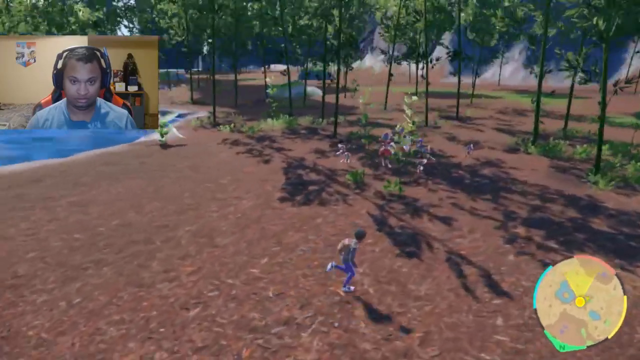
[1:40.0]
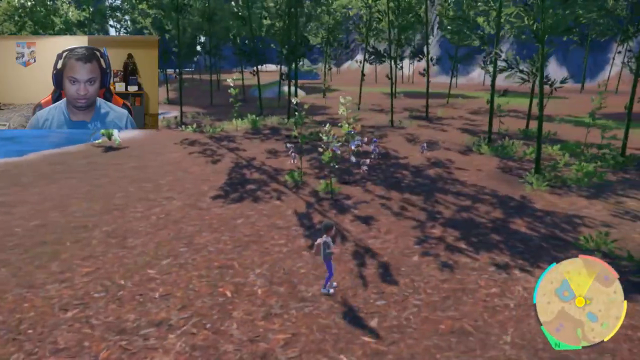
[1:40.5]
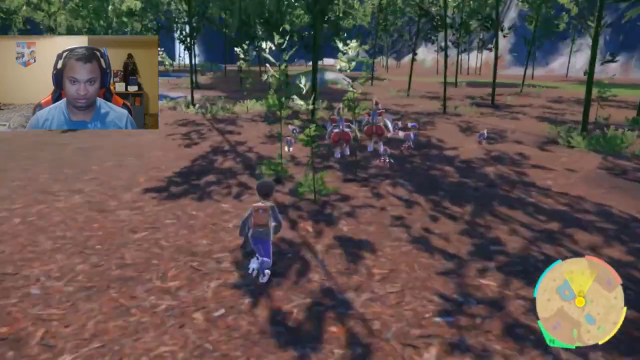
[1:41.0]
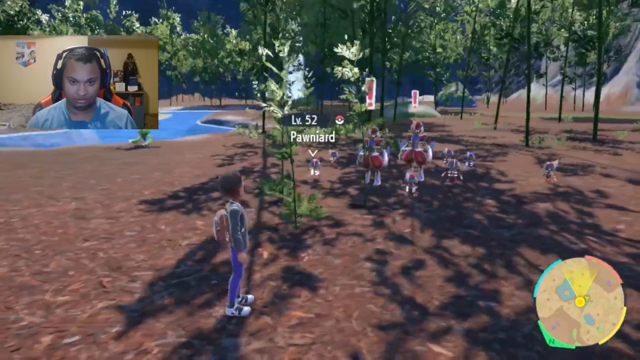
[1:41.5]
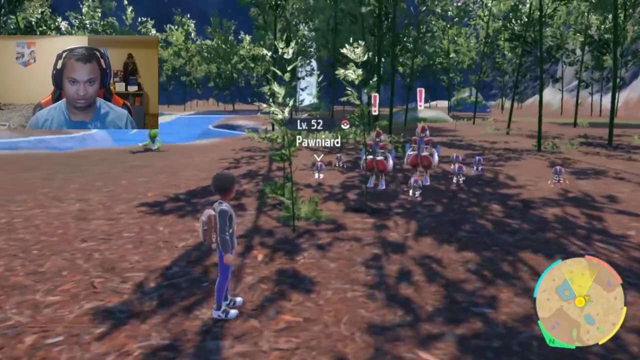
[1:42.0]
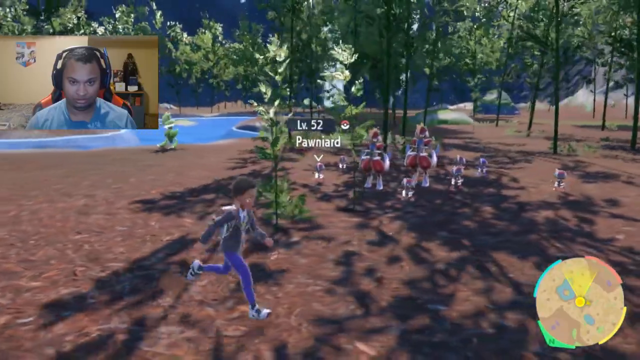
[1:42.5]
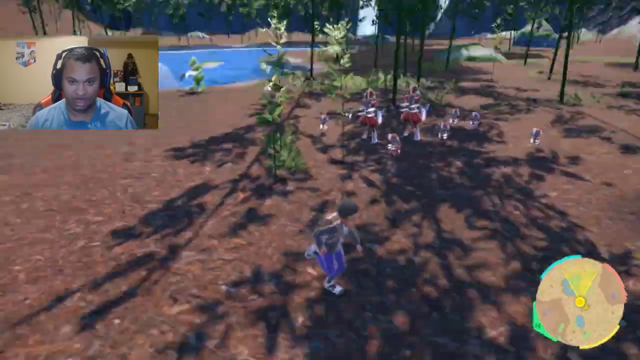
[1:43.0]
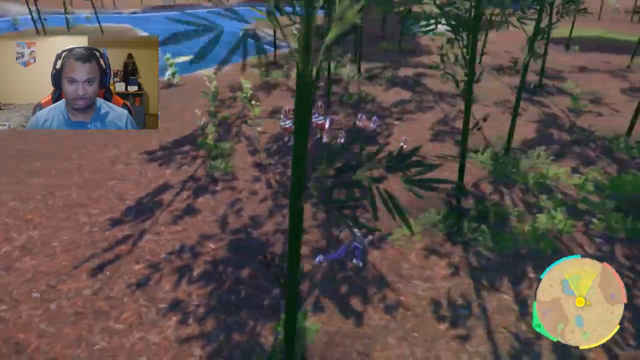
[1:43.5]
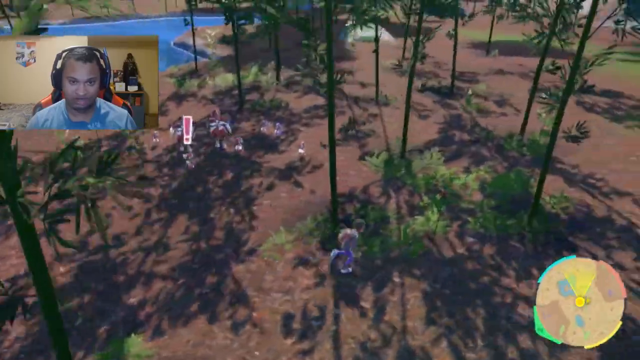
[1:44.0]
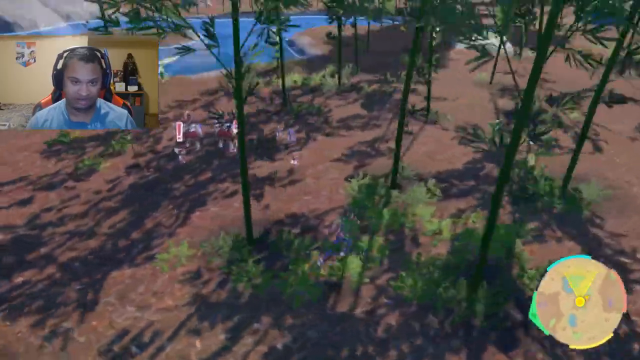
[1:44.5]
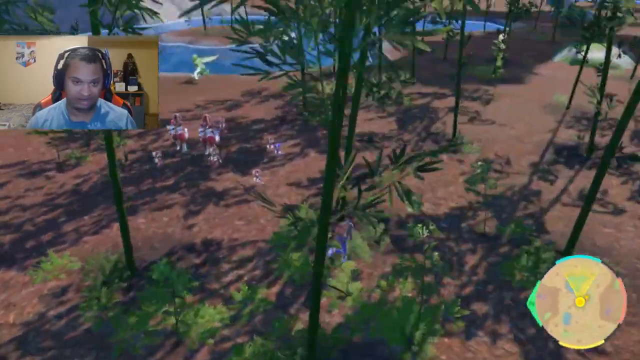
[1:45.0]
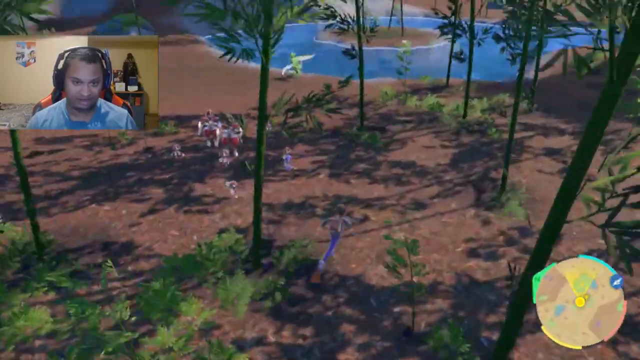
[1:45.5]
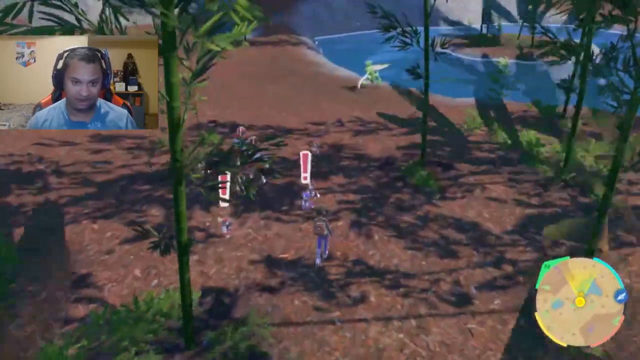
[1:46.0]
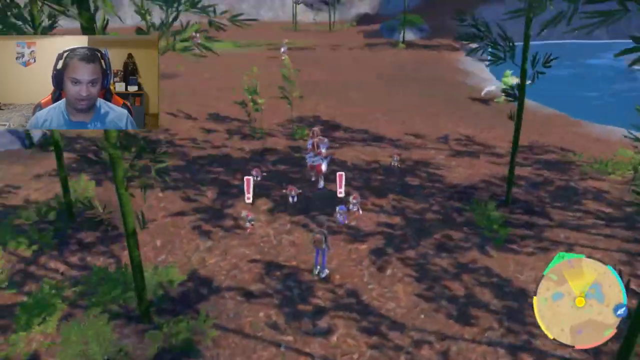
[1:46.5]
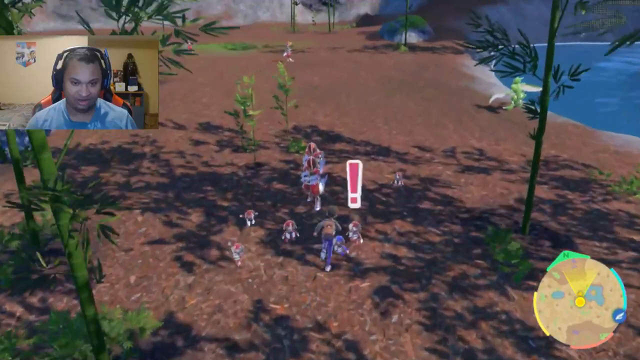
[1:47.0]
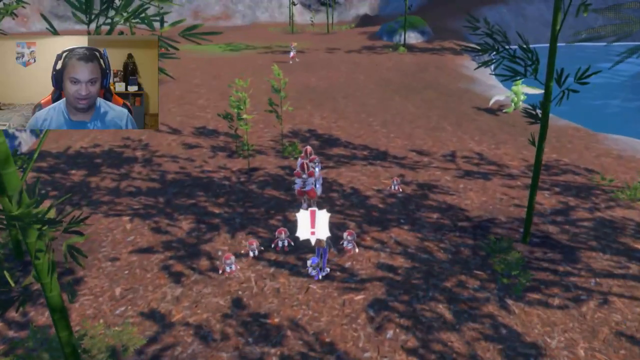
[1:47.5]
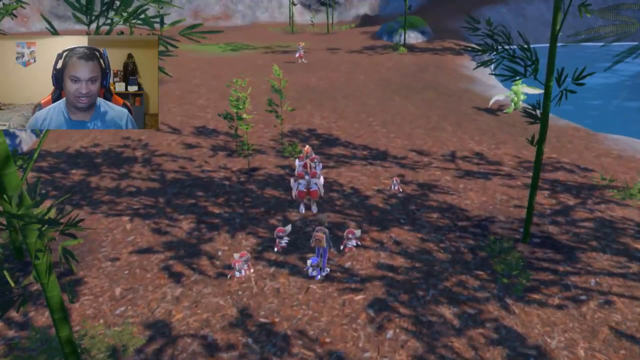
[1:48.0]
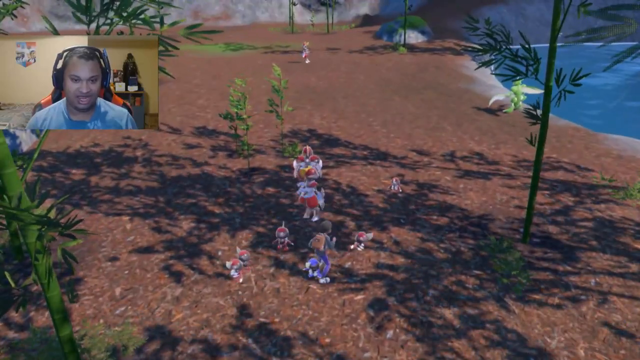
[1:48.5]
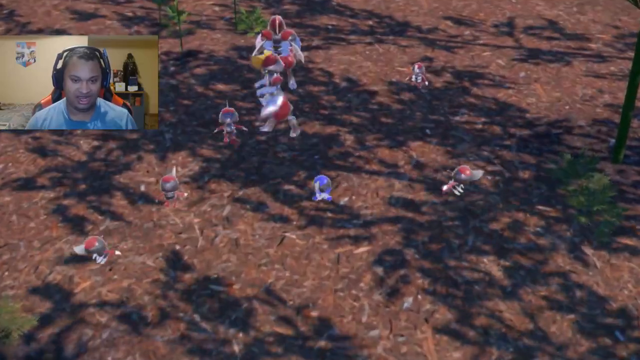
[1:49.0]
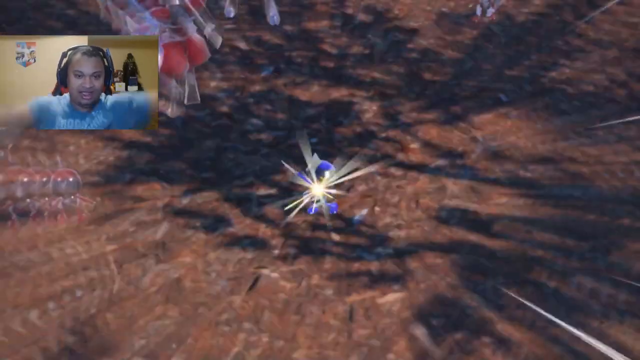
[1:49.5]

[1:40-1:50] The boy is in a different area of the park, in front of some short shrubs or young trees, running around along the edge of the forest. A little lake is on the left side of the screen; he runs sort of around it and up and around behind the short shrub trees. There is a group of creatures, maybe Pokemon, that look kind of like robots: two tall ones with something like helmeted armor in purple and red, and what looks like six really short, tiny robots that look the same, also purple and red. They look kind of like Transformers, and the tiny ones have exclamation points over their heads. The boy runs up to them and an exclamation point appears over his head. The view zooms in on one of the tiny robots, which has a big round black globe head or helmet; it seems to get agitated and is sort of getting lit up, looking like it is going to power up or explode, while the other tiny robots start to run away.